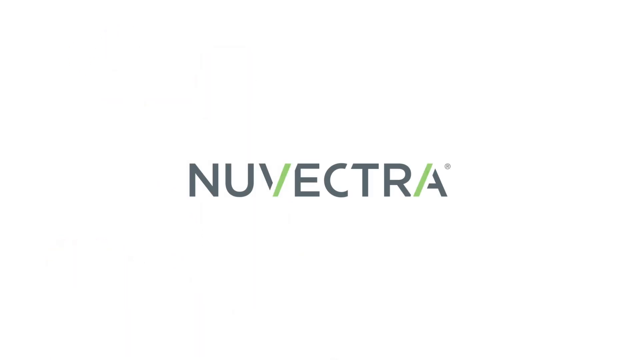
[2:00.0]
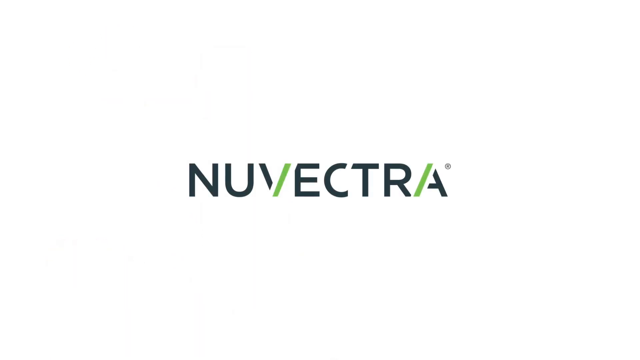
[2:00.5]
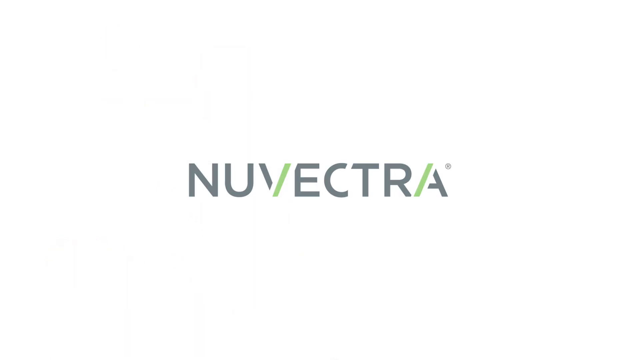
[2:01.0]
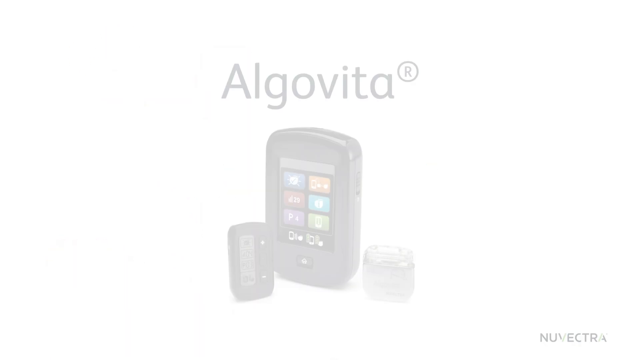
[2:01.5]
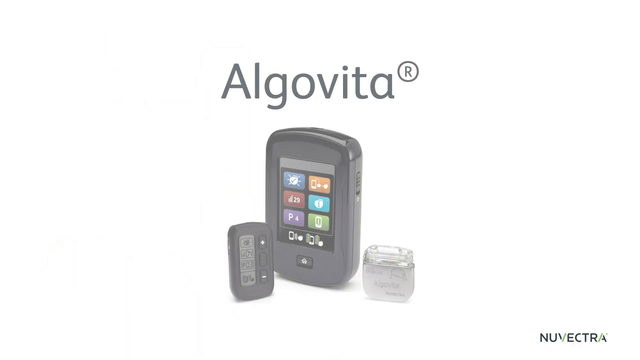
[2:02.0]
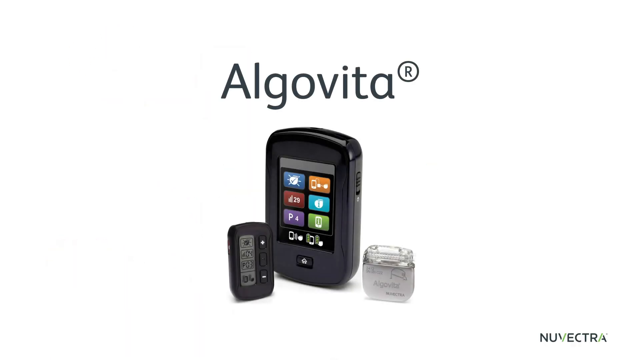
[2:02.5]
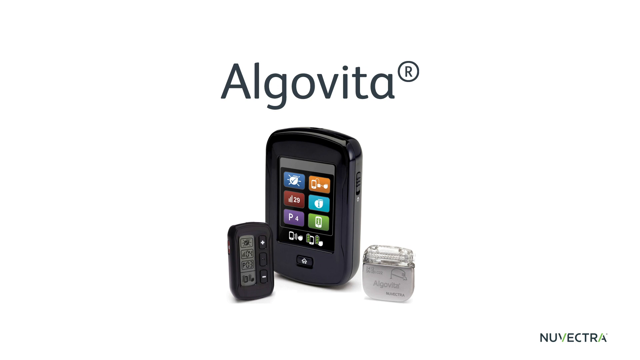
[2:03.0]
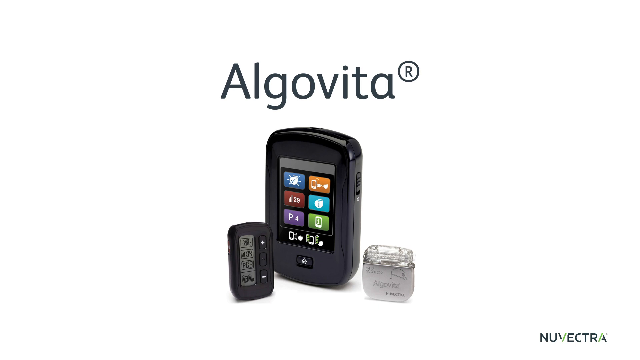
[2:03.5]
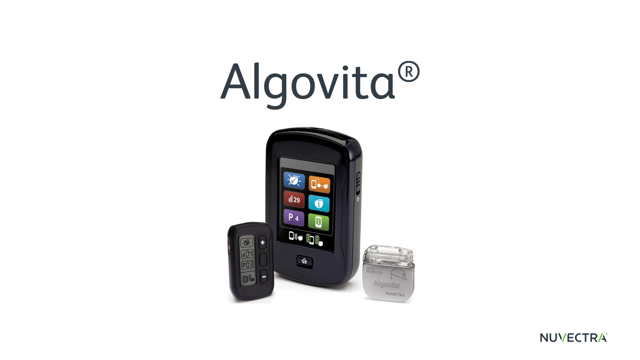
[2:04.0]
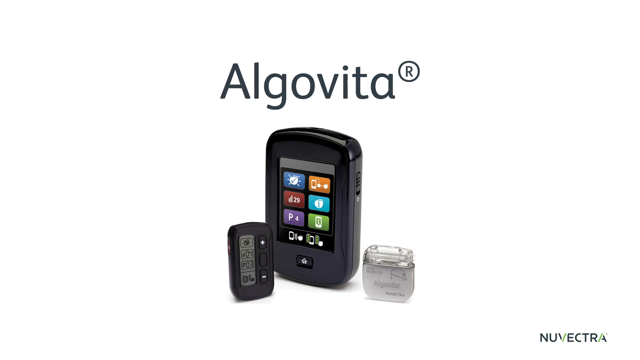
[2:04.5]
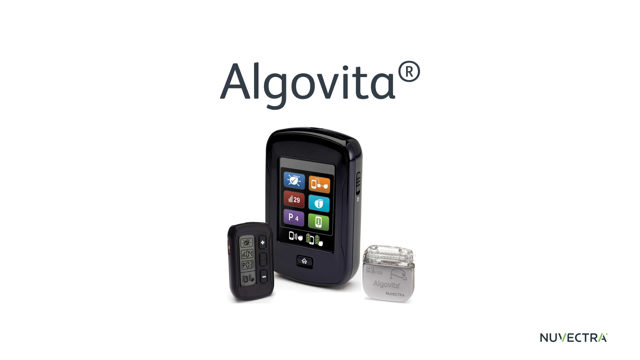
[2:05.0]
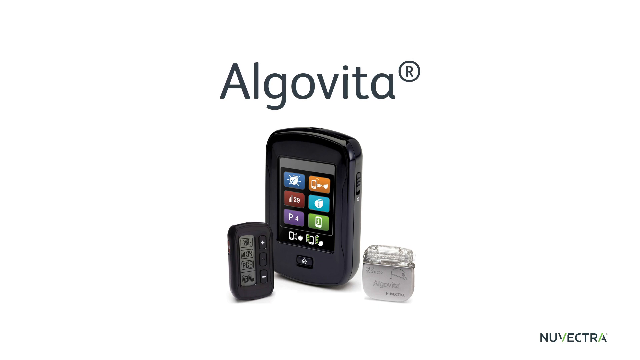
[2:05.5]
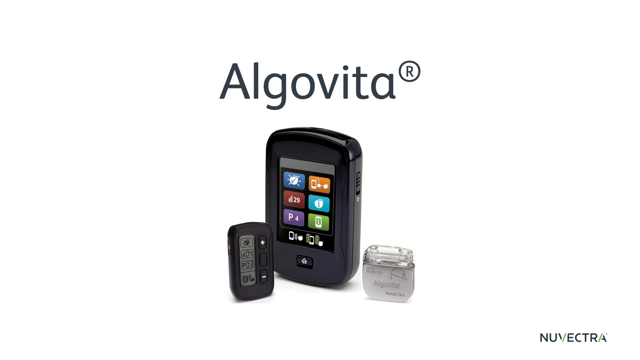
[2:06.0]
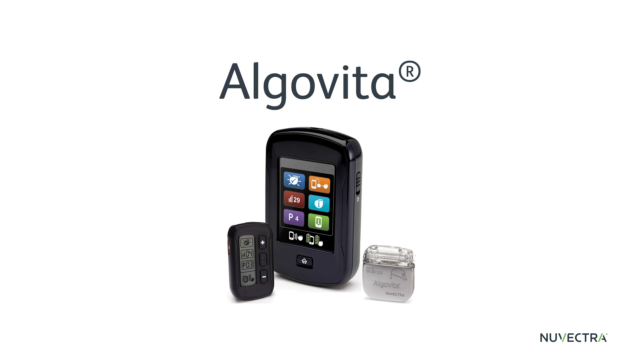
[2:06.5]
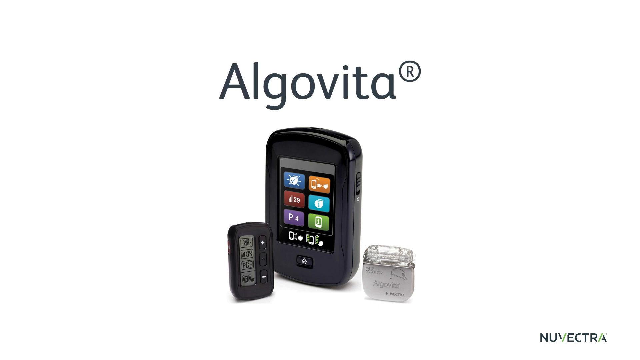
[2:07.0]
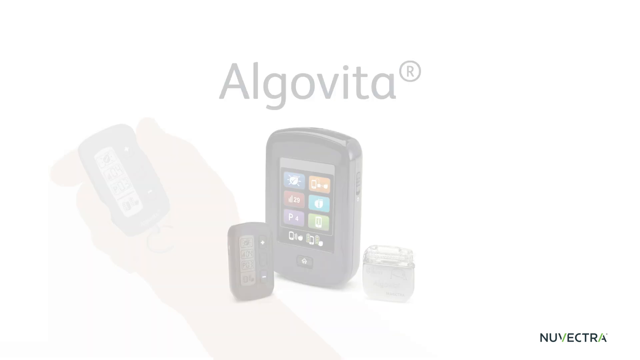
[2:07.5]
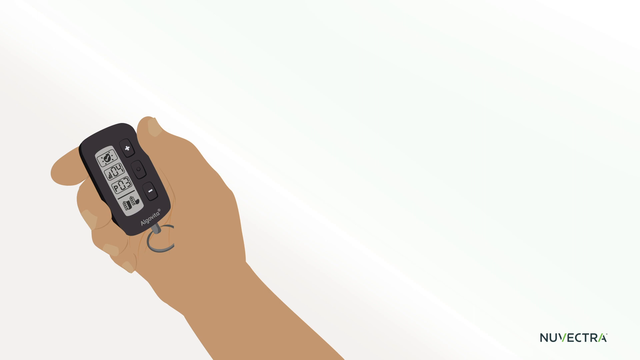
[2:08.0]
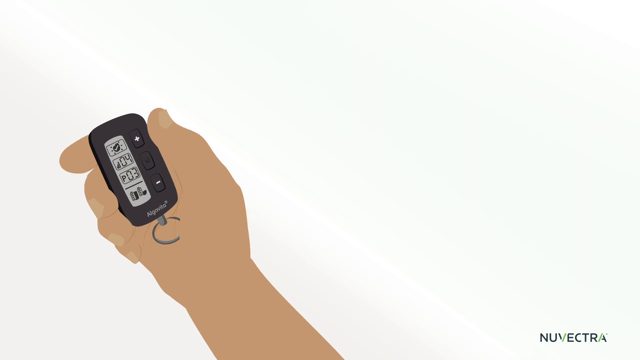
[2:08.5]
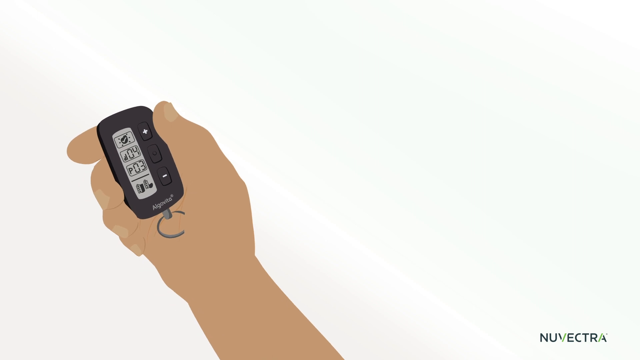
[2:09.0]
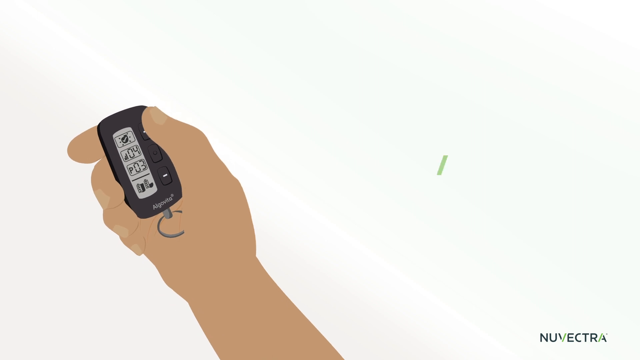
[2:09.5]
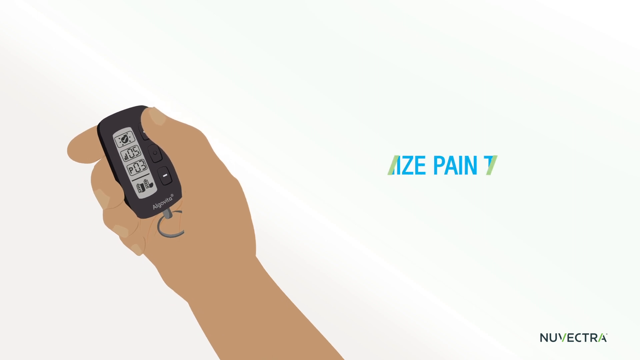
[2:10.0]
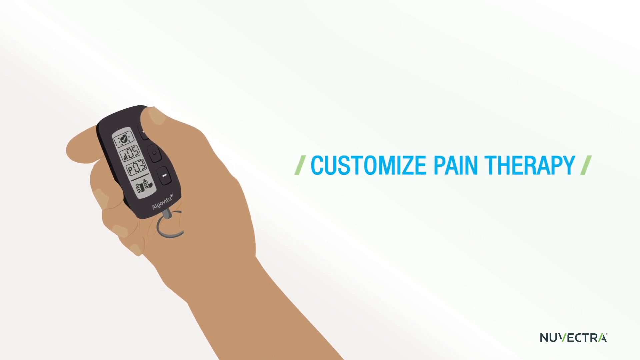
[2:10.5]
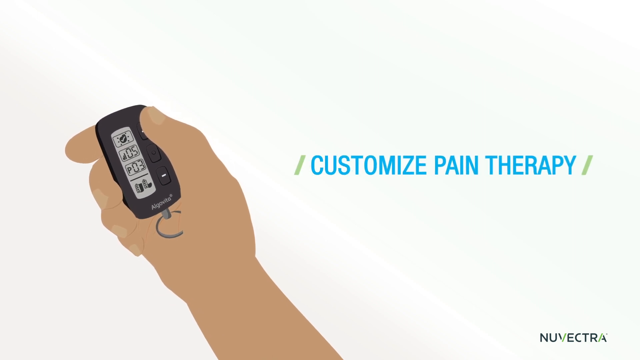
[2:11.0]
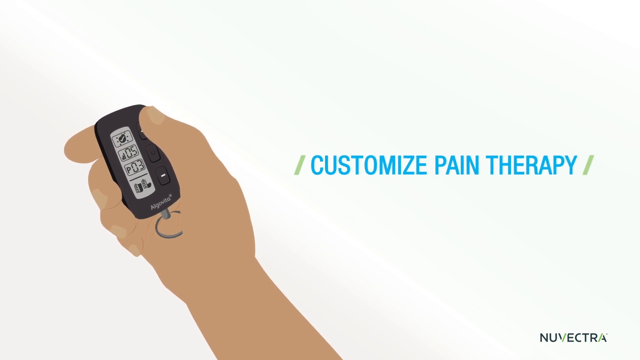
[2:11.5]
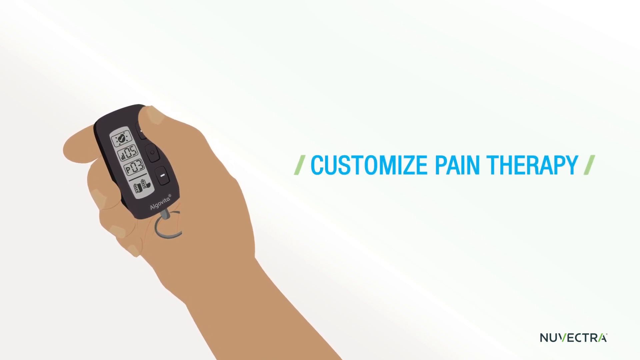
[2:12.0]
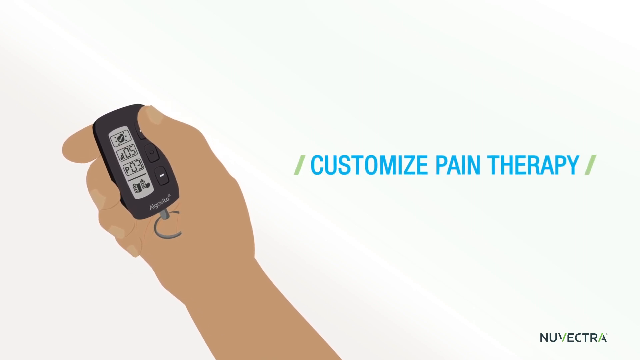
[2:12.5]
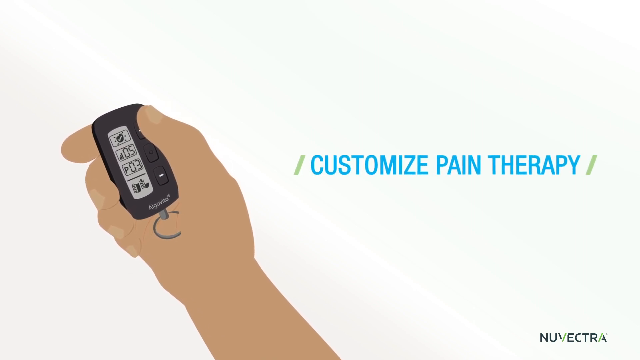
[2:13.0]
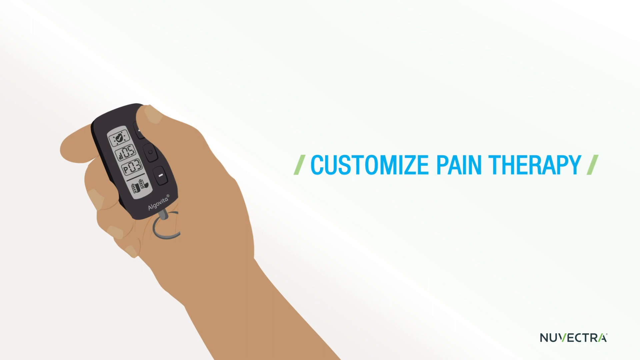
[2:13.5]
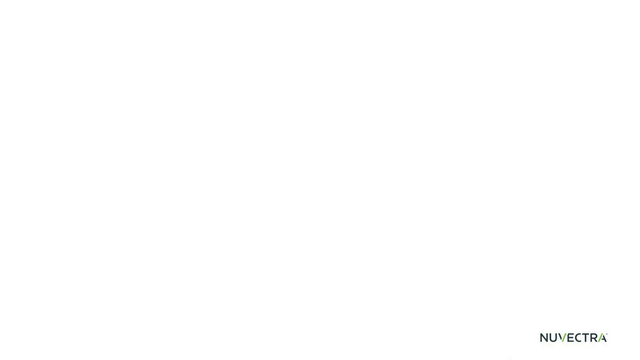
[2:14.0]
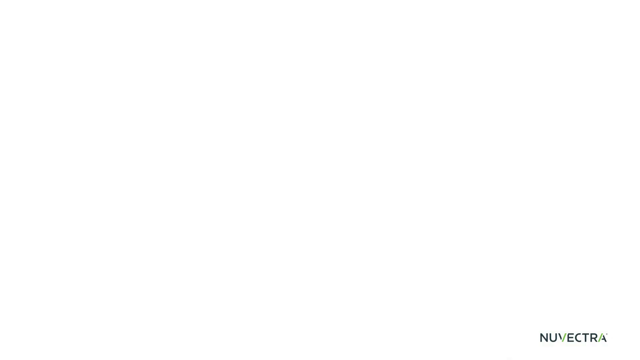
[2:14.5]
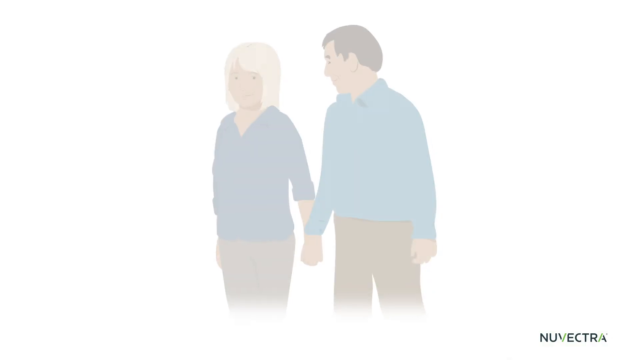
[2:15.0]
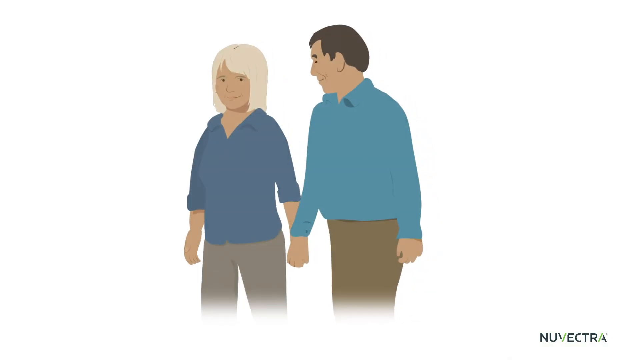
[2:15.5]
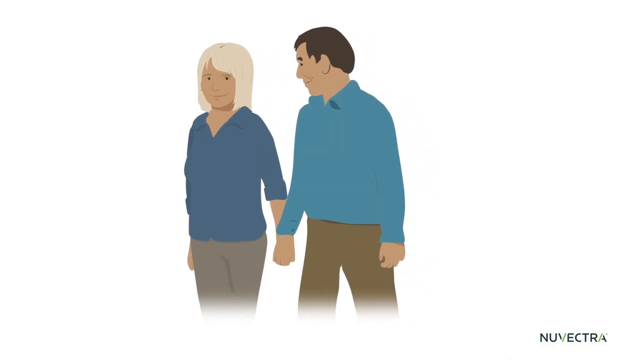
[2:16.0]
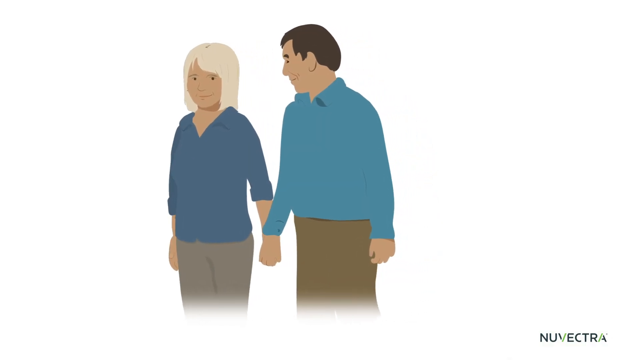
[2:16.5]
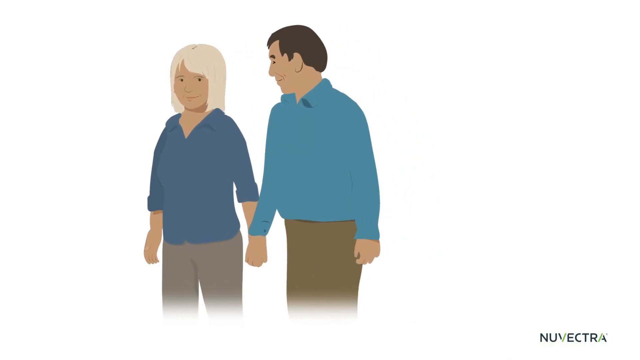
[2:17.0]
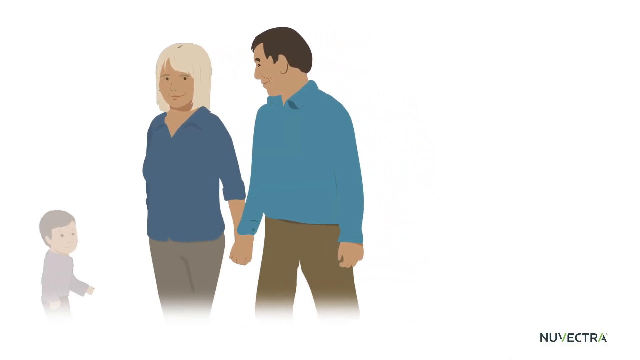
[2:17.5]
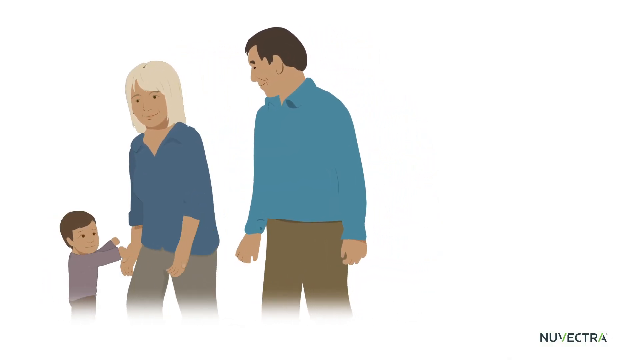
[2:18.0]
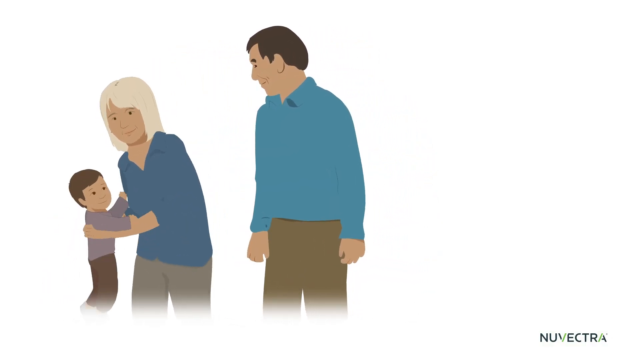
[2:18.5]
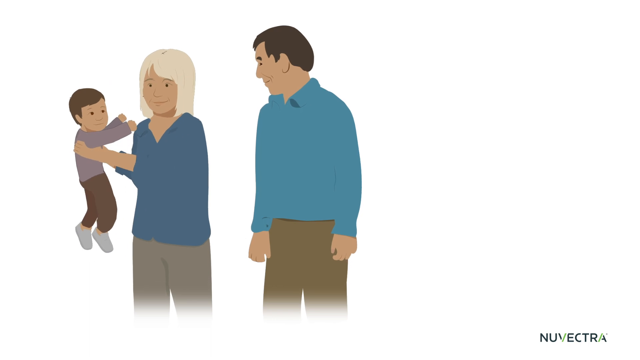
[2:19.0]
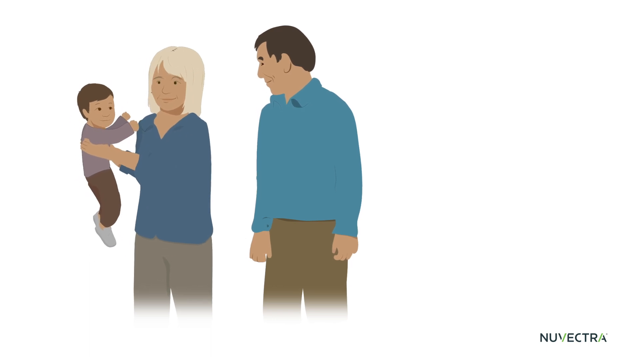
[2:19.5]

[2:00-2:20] A closing white screen shows the brand name seen earlier. A new white screen then reads "Algo Vida." Below is a device kind of shaped like a key fob, with the larger one in the center, and to the right is the metal device seen earlier in the video. The next screen has a white background: an animated person's hand goes up the left side of the screen holding the key fob-like device and presses the top button. A couple is holding hands and walking to the left. The woman then picks up a small child on the left side of the screen.